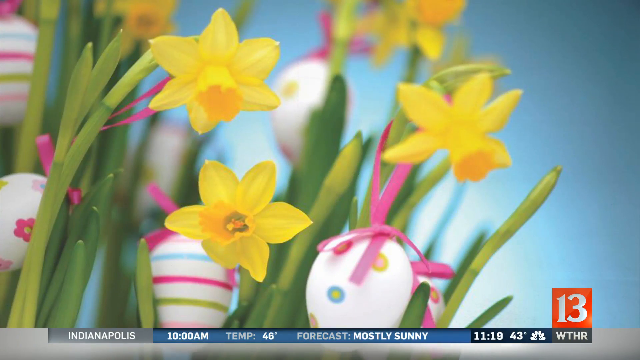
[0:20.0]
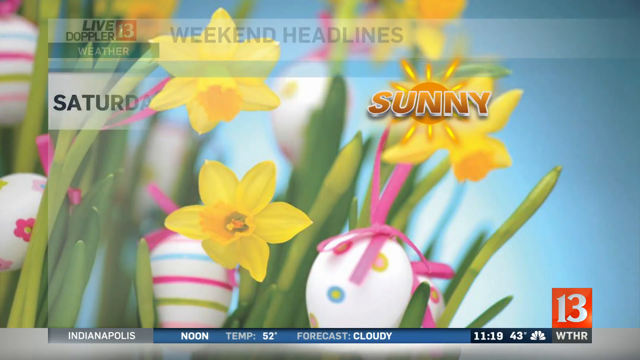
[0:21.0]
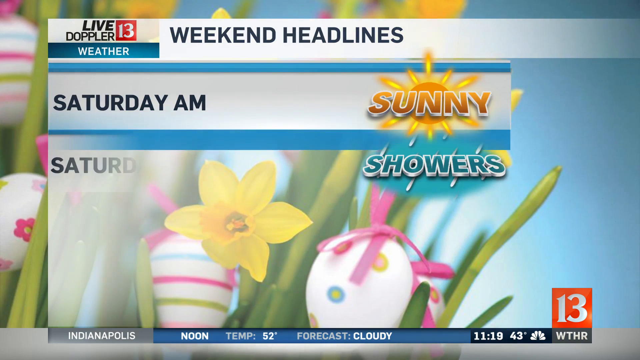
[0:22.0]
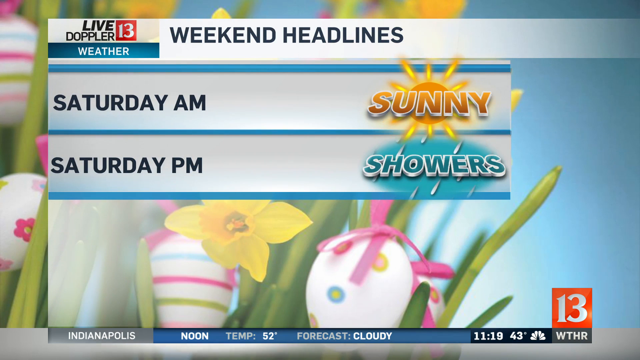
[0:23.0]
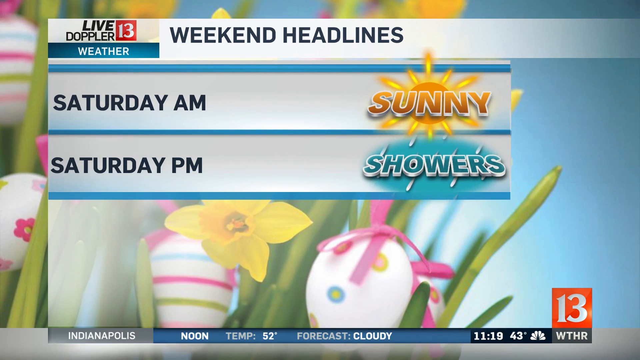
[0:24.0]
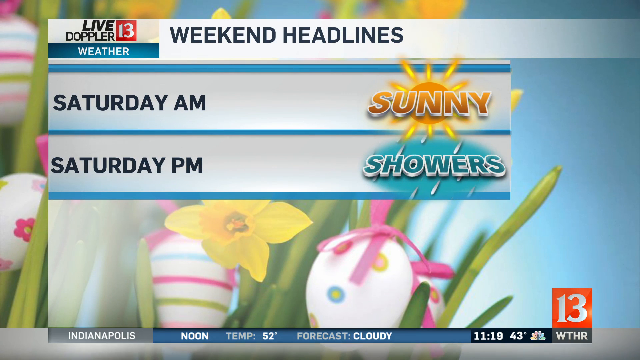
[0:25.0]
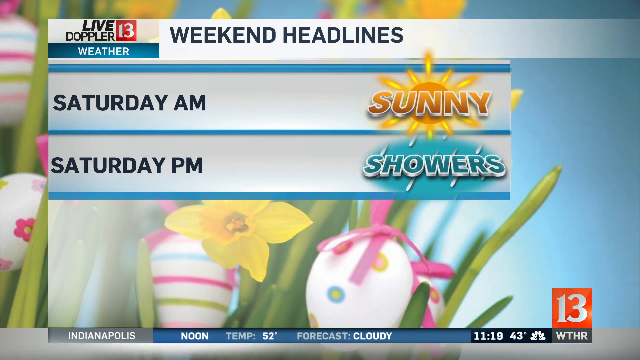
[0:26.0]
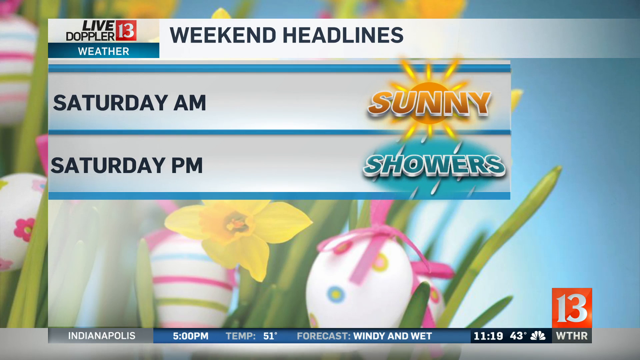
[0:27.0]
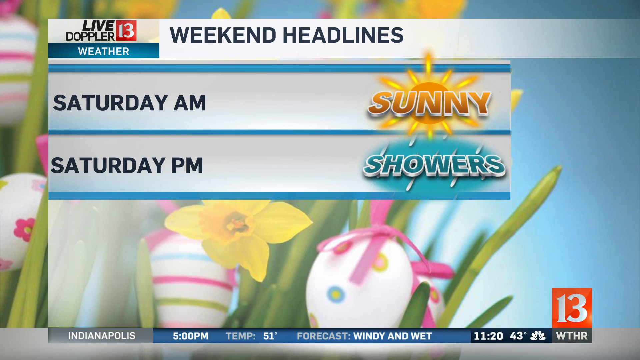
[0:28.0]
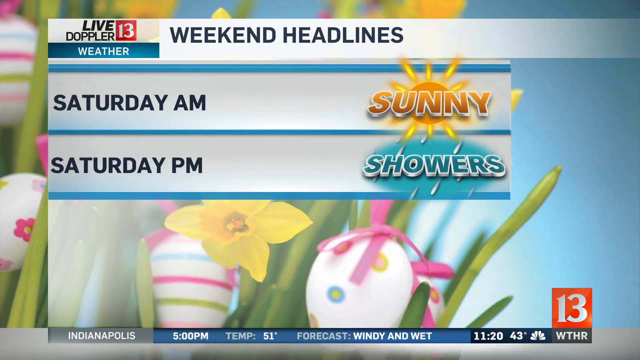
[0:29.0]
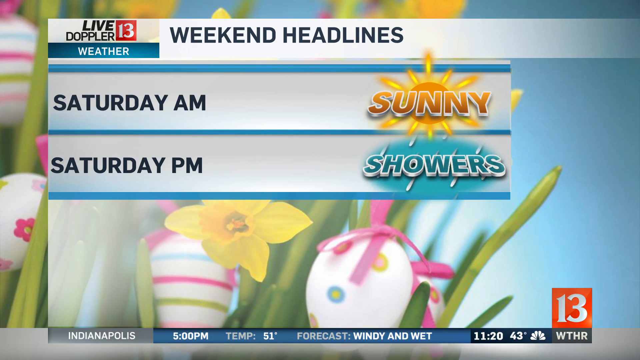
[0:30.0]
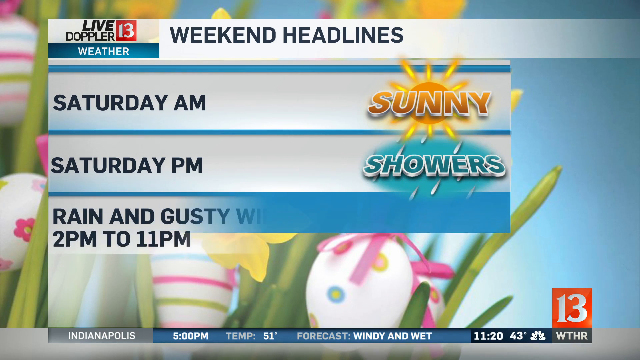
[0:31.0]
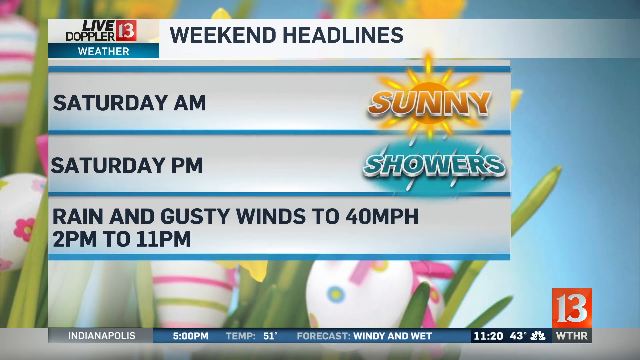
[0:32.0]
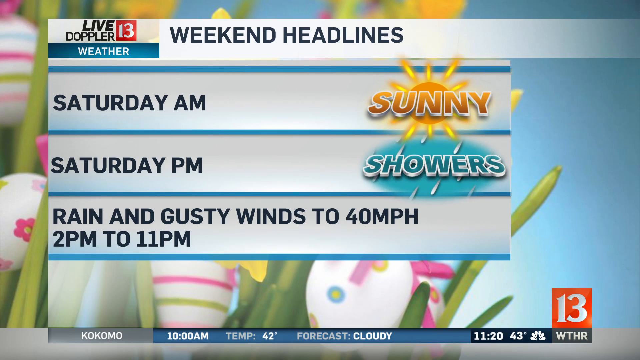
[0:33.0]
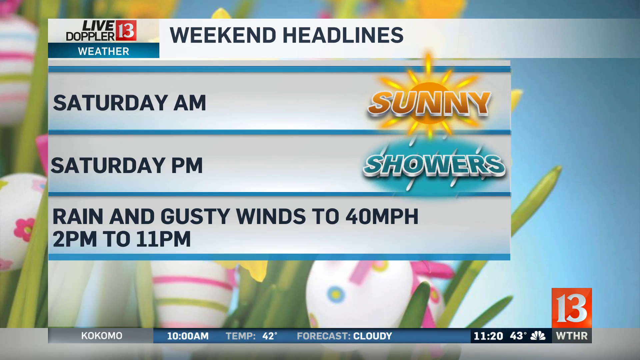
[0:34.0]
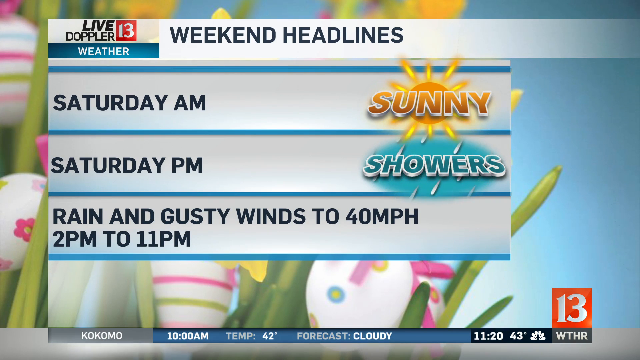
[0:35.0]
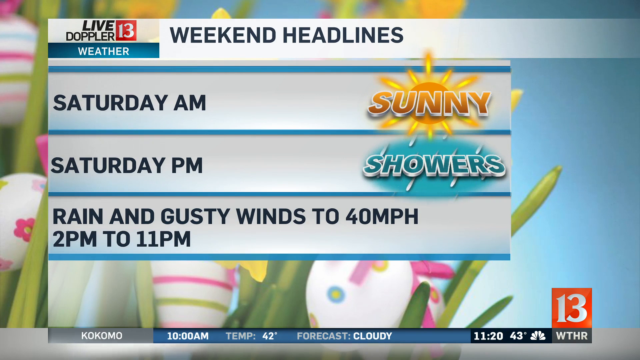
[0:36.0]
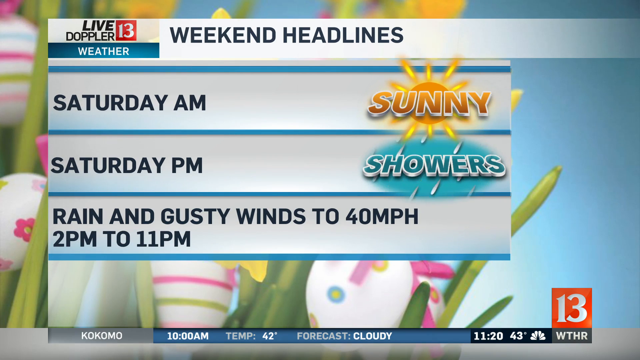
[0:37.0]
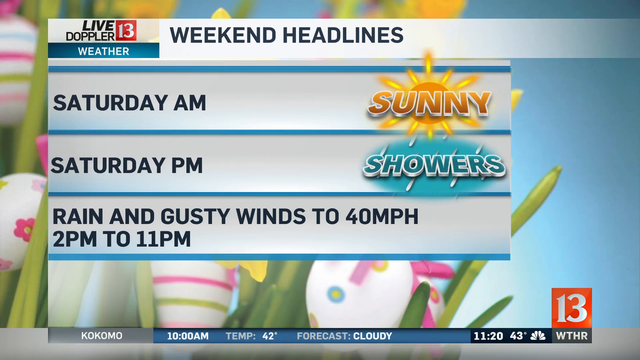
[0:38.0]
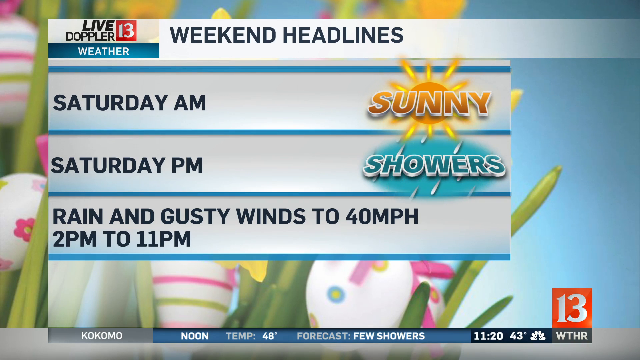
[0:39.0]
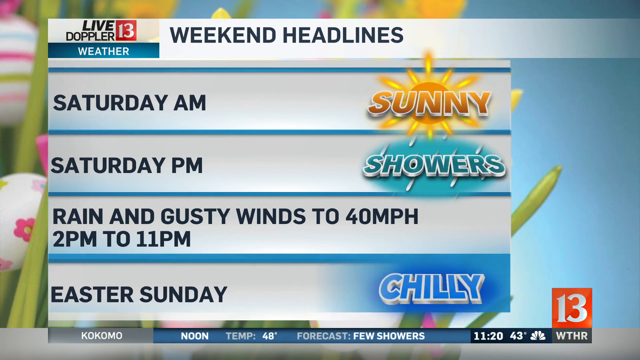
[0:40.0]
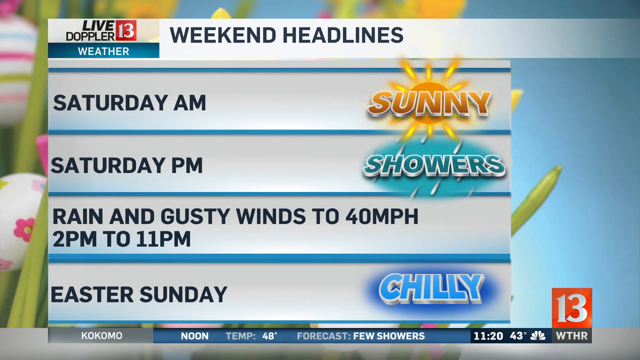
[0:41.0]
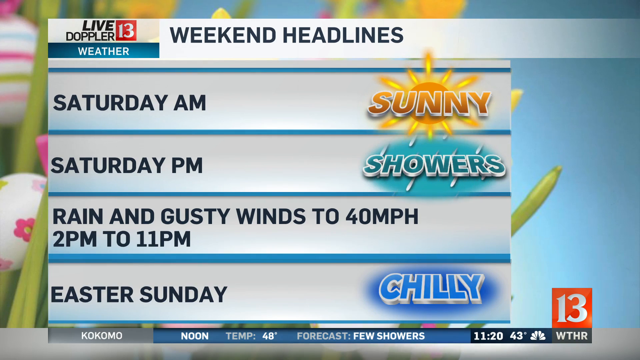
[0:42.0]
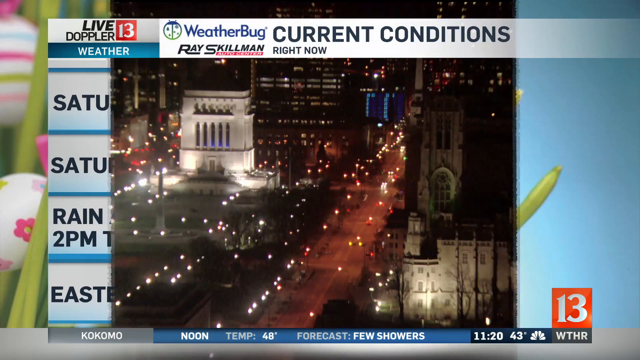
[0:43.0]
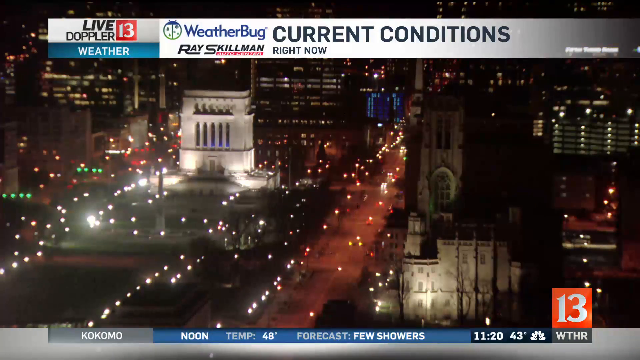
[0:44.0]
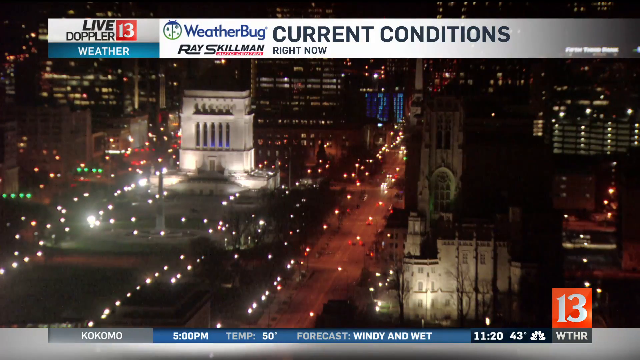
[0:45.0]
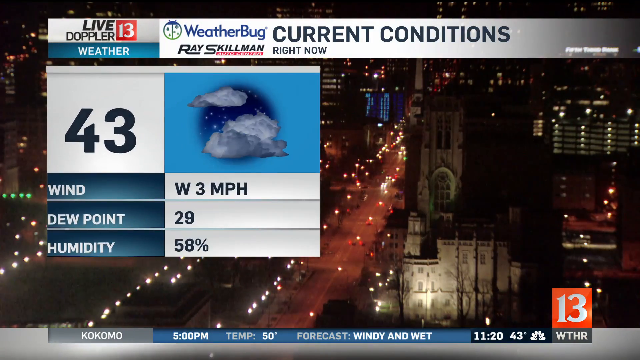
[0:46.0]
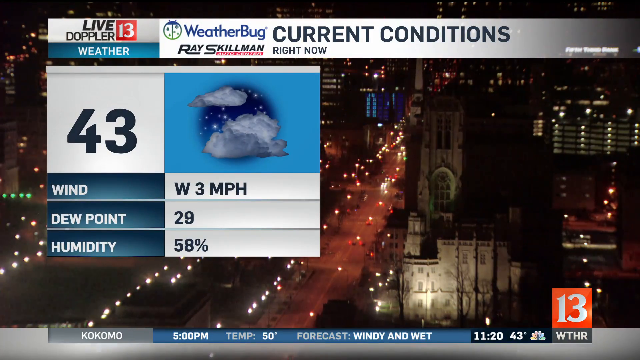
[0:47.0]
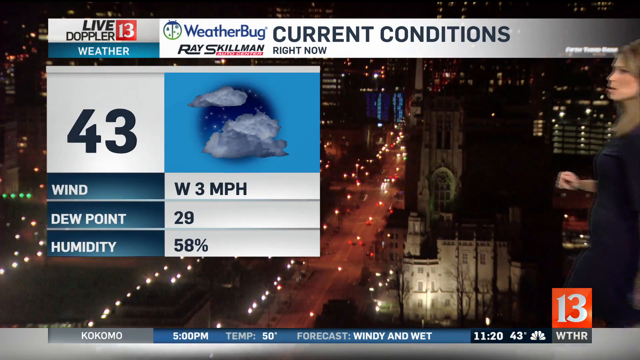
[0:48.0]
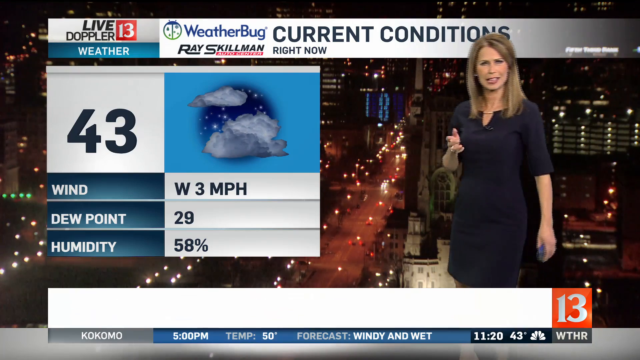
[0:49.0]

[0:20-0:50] Yellow flowers are shown, and shortly after that what looks like a weather update appears. At the top left of the screen is "live Doppler 13 weather", and on the side are "weekend headlines": Saturday morning is going to be sunny, Saturday night will have showers, with "rain and gusty winds to 40 mph 2pm to 11pm", and Easter Sunday looks like it will be chilly. The next screen shows a city at night; it looks dark, with a lot of lights turned on in the area. At the top of the screen "current conditions" for "right now" is written. A weather update follows: 4 degrees, wind W 3 MPH, dew point 29 and humidity 58%.